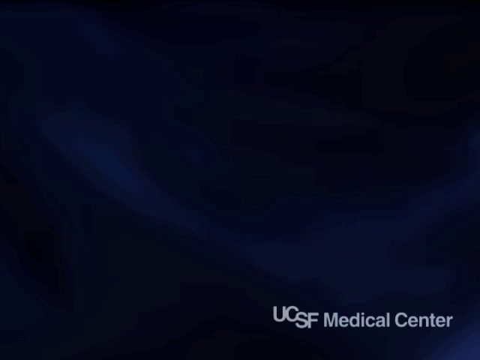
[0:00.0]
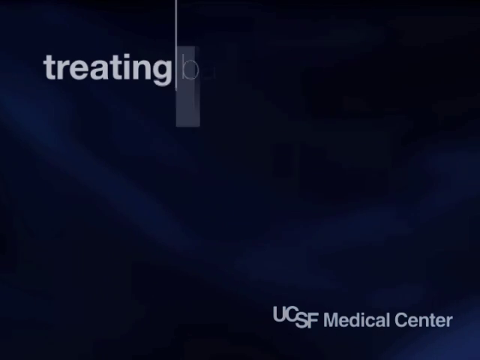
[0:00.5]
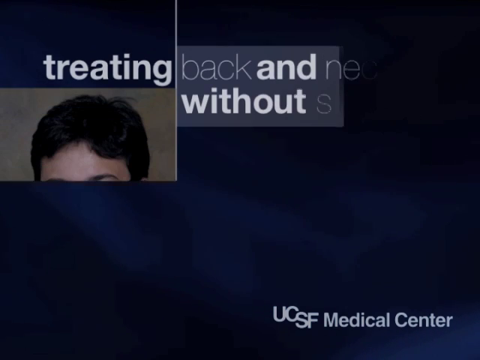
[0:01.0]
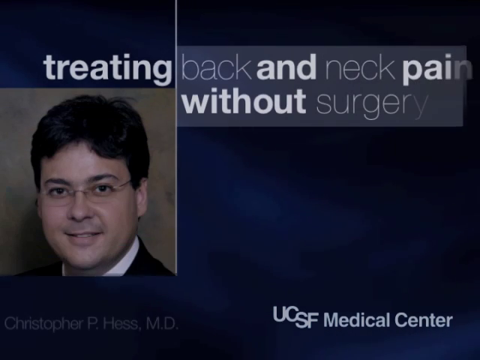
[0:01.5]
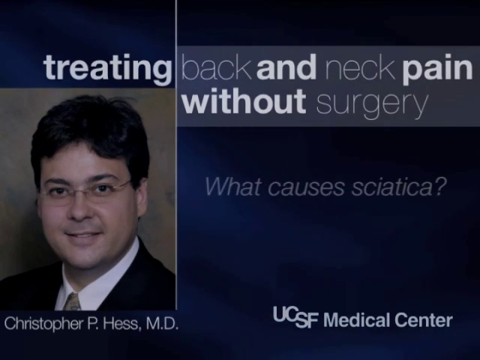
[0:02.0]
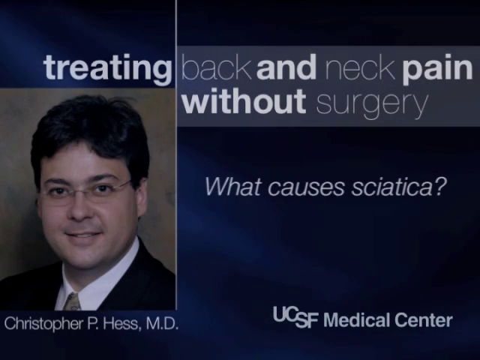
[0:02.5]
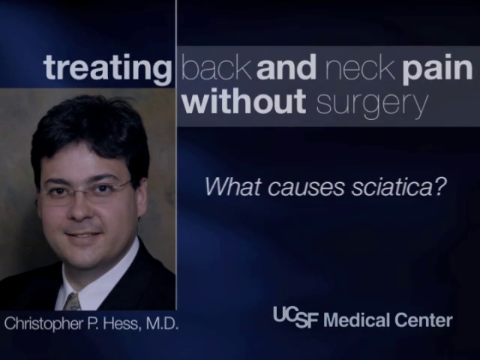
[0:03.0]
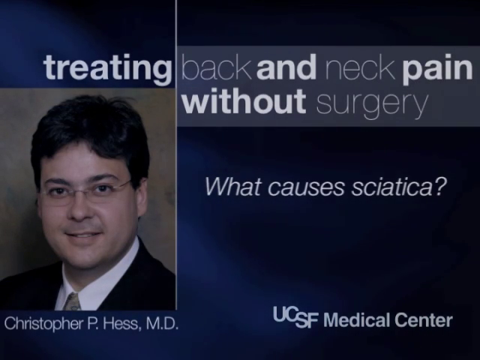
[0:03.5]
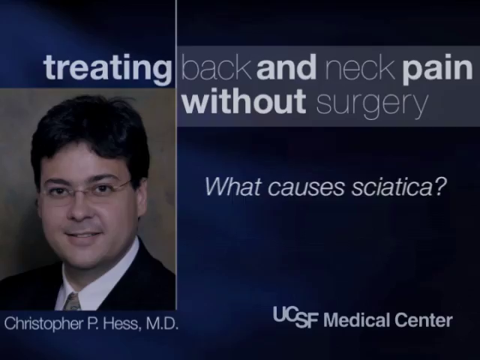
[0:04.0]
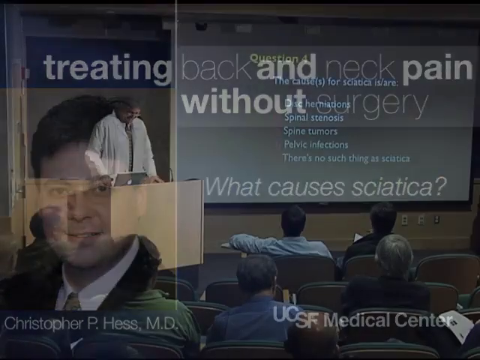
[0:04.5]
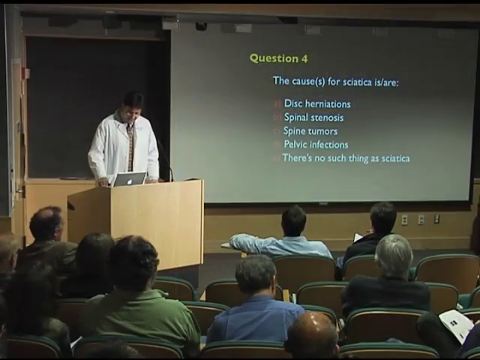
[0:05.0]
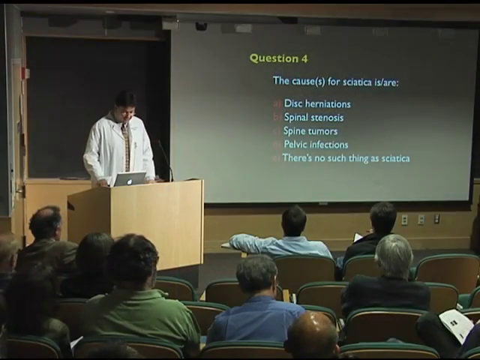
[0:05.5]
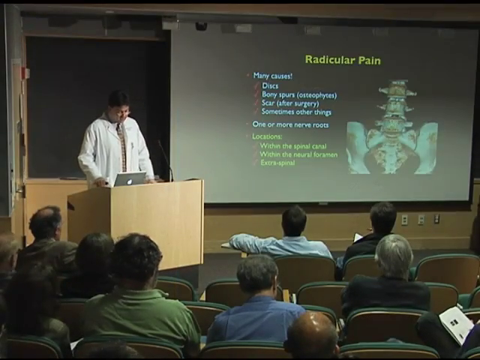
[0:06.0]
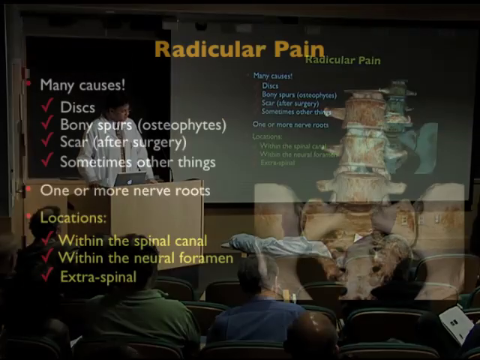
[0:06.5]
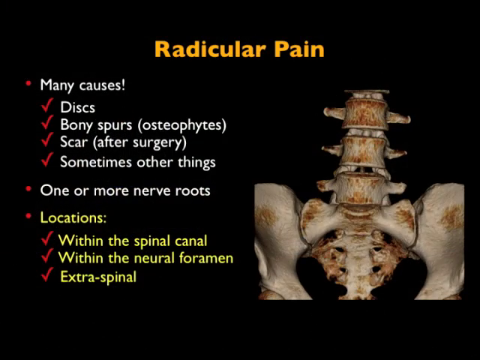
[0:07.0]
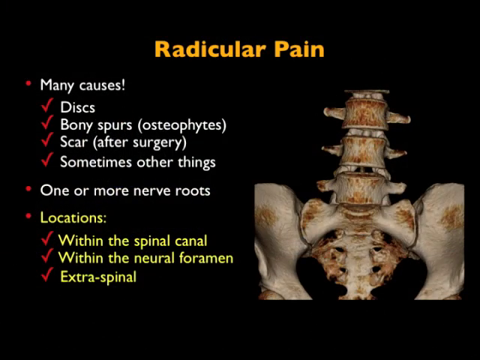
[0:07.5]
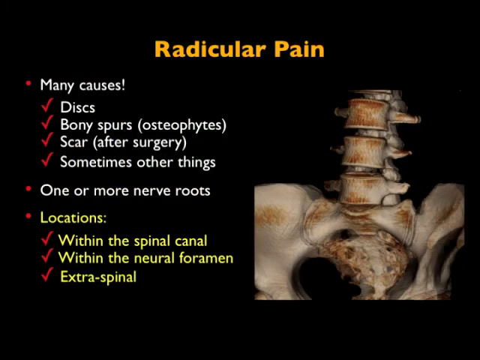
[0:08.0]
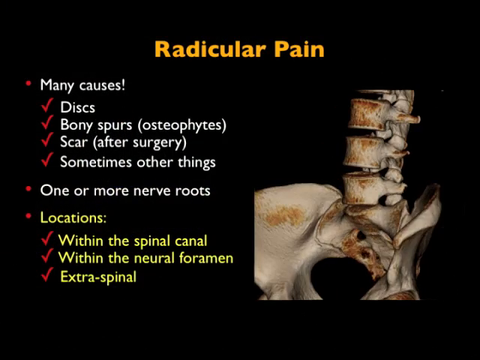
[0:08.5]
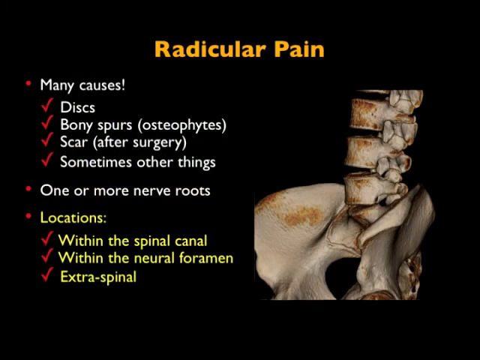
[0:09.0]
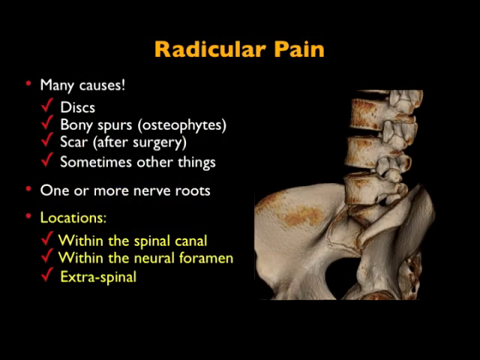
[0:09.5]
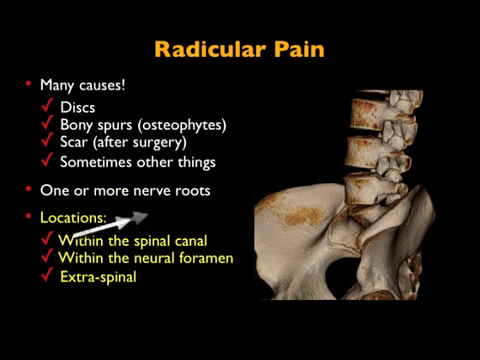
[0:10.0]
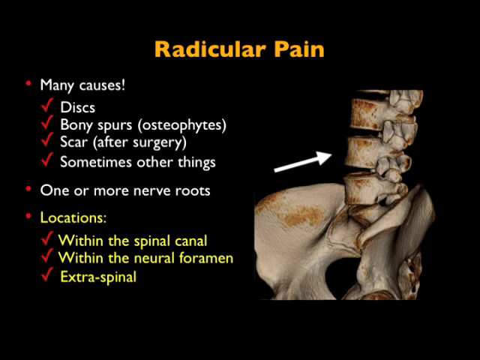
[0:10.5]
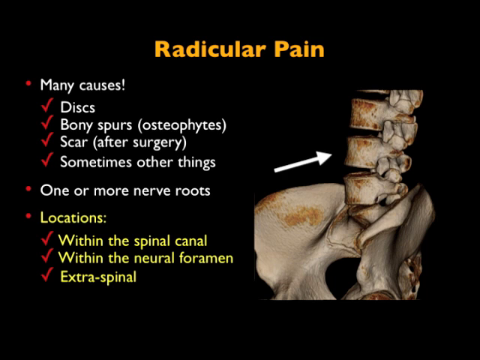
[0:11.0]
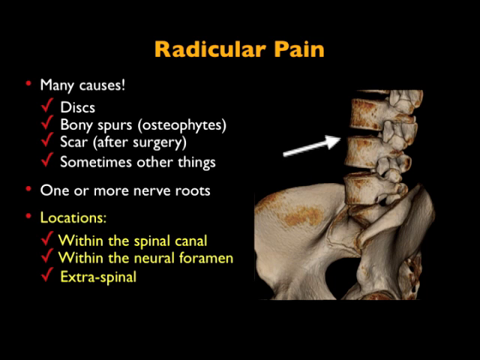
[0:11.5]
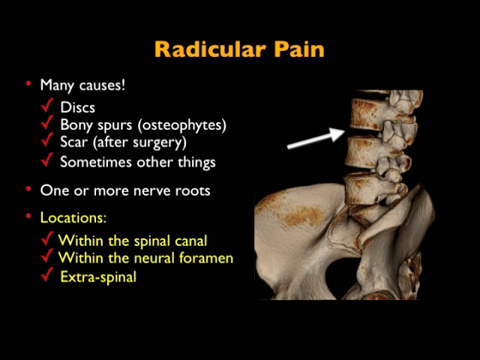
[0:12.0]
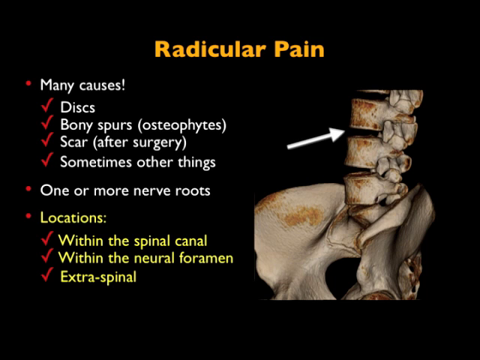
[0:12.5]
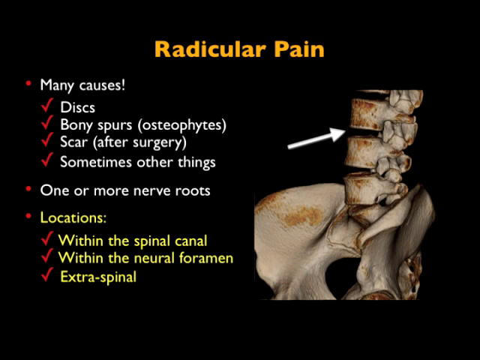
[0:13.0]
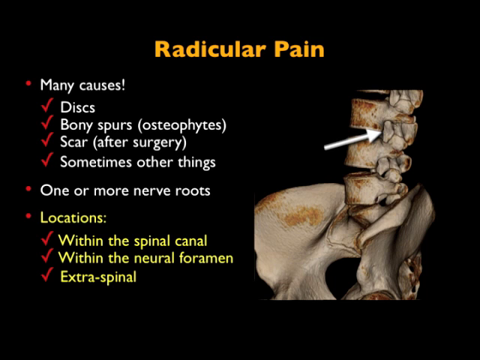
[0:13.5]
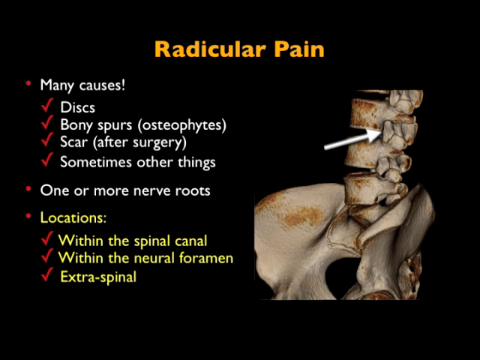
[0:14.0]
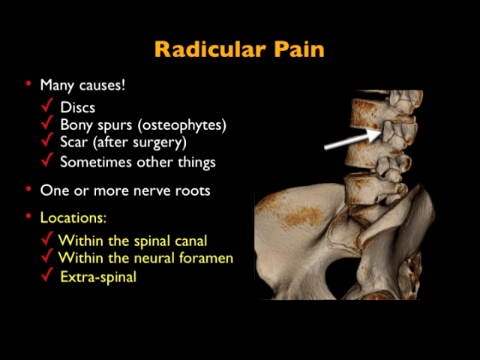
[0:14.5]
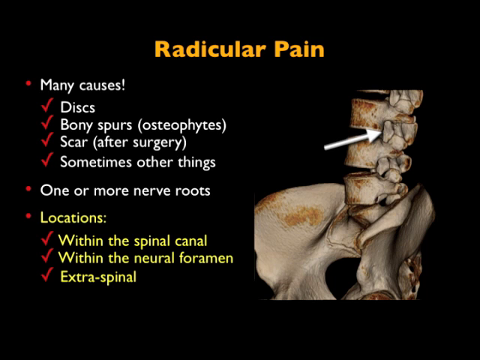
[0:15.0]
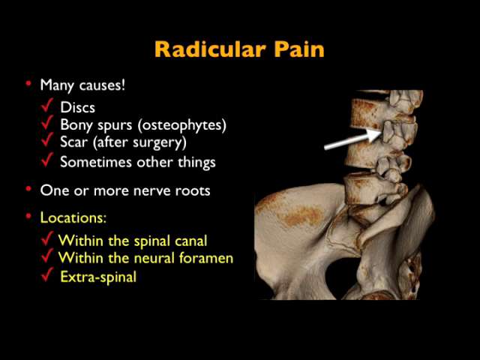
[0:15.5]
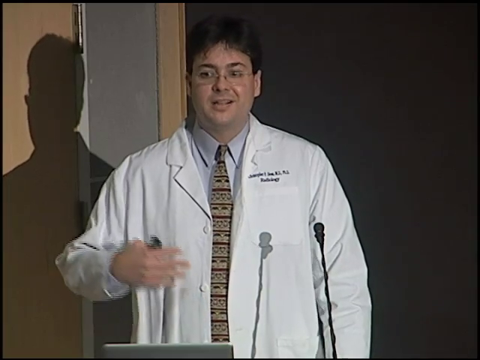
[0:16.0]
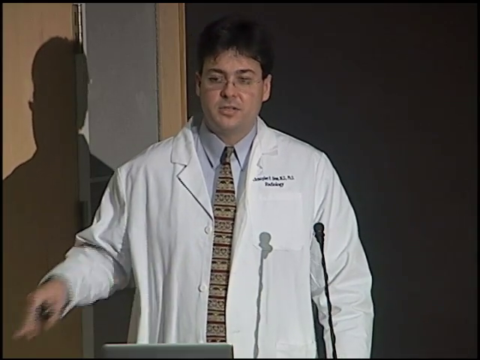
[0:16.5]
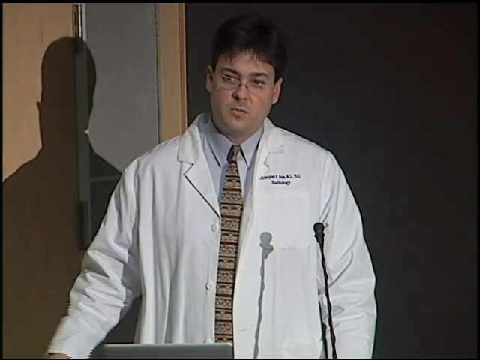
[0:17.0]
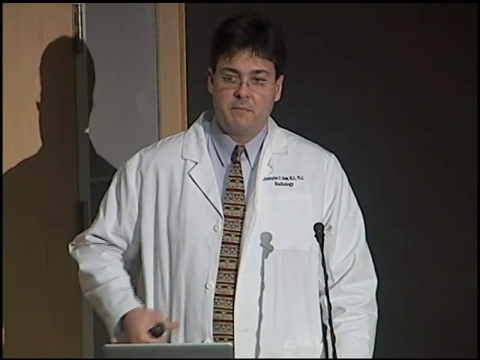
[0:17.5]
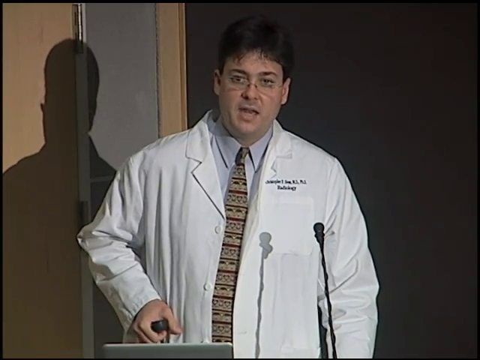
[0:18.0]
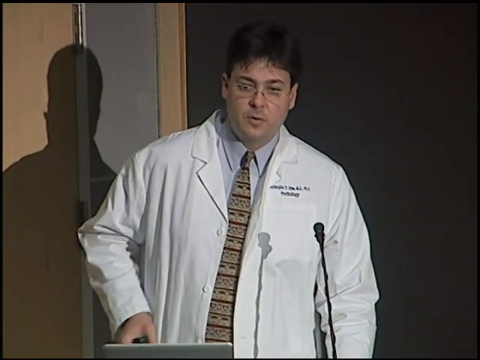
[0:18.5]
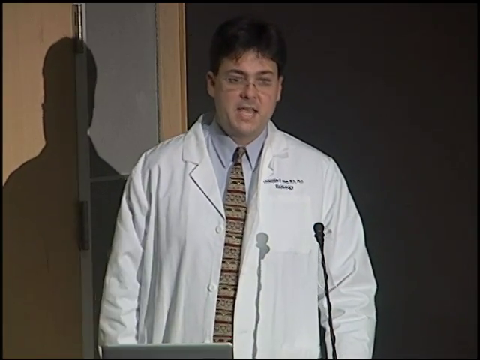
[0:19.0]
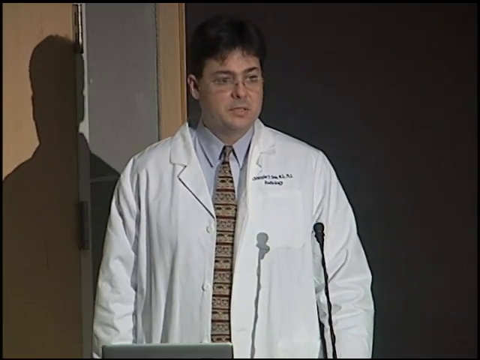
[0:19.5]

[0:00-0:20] A photograph of a man appears on the left side of the screen. He has short black hair and glasses and wears a black suit with a white button-up shirt and a yellow tie. The man's name is Christopher P. Hess, M.D., and text includes "without surgery" and "What causes sciatica?" At the bottom of the screen is a logo for the UCSF Medical Center. Dr. Hess then stands behind the podium in front of an audience full of people sitting in chairs, and behind him is a screen. The screen says "question 4: the causes for sciatica are: disc herniations, spinal stenosis, spine tumors, pelvic infections, or there's no such thing as sciatica." It then switches to a screen that says "radicular pain" and shows bones in the spine that have been damaged. The screen lists many causes: discs, bony spurs, scar, sometimes other things; one or more nerve roots; locations include within the spinal canal and within the neural foramen. The image of the spine rotates and a white arrow points out problems with it. The video cuts to Dr. Hess, who is speaking.